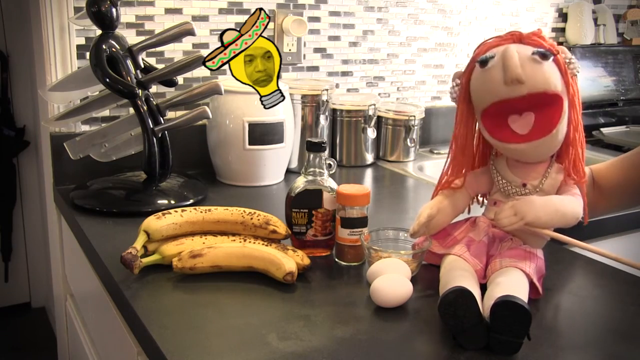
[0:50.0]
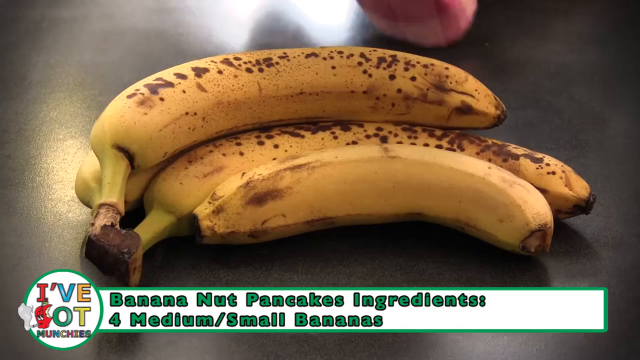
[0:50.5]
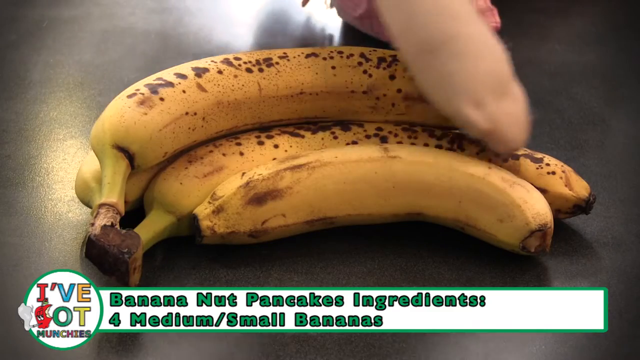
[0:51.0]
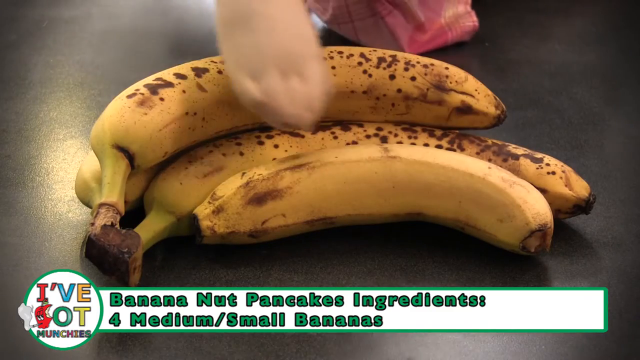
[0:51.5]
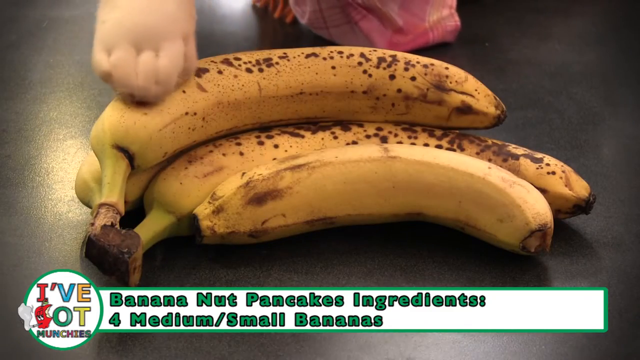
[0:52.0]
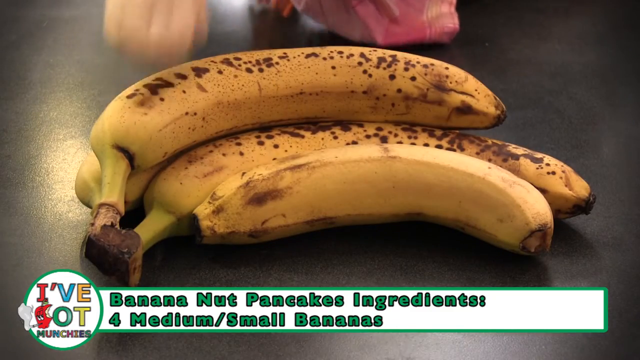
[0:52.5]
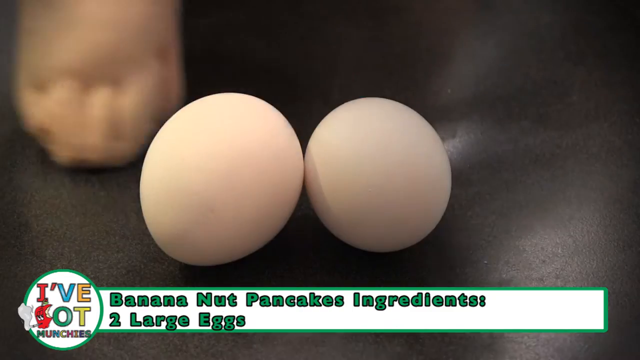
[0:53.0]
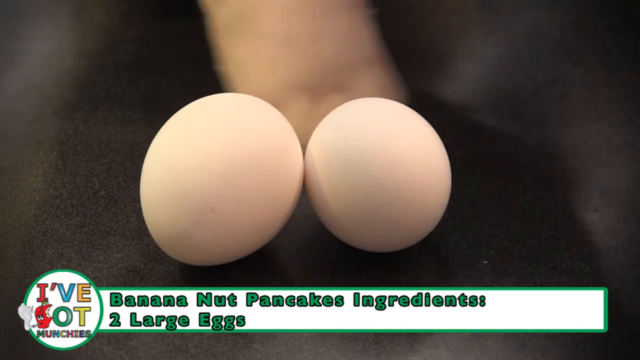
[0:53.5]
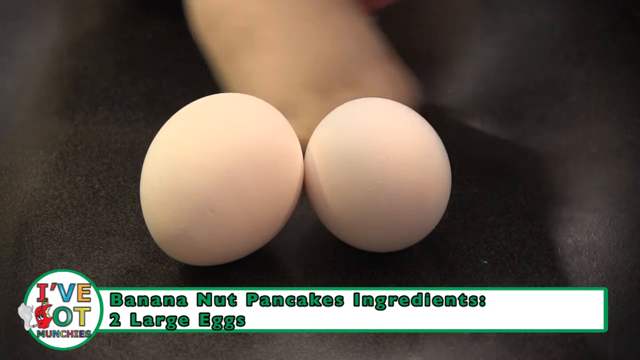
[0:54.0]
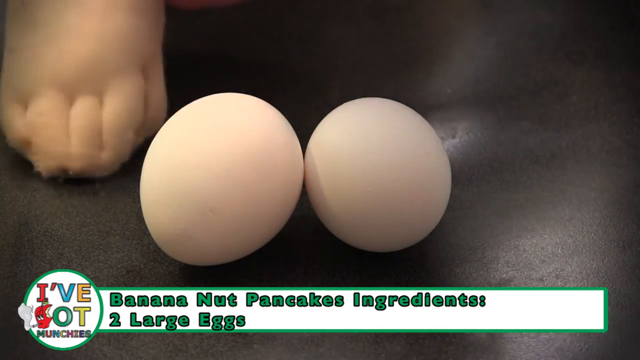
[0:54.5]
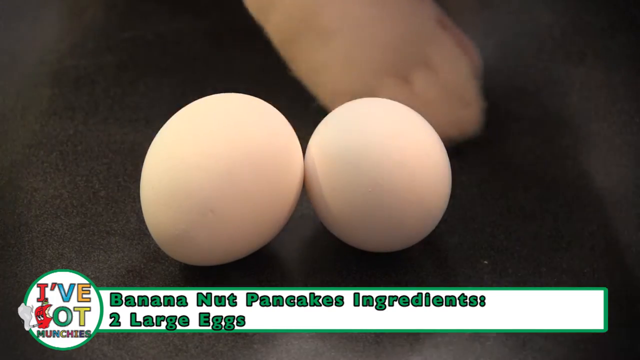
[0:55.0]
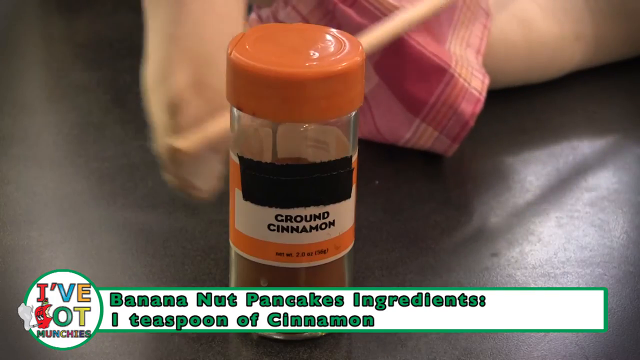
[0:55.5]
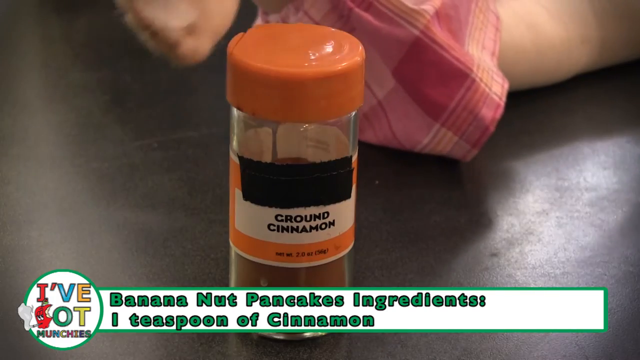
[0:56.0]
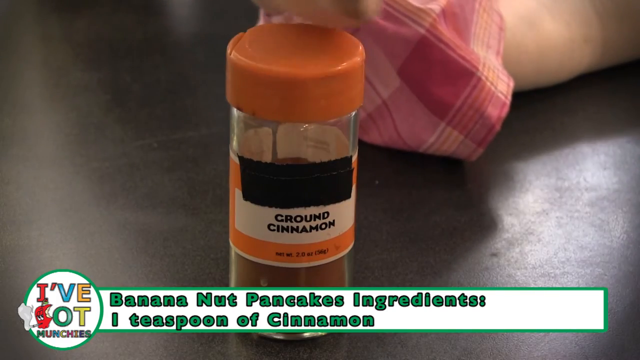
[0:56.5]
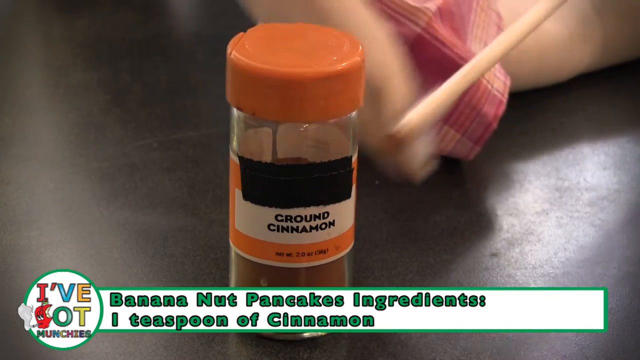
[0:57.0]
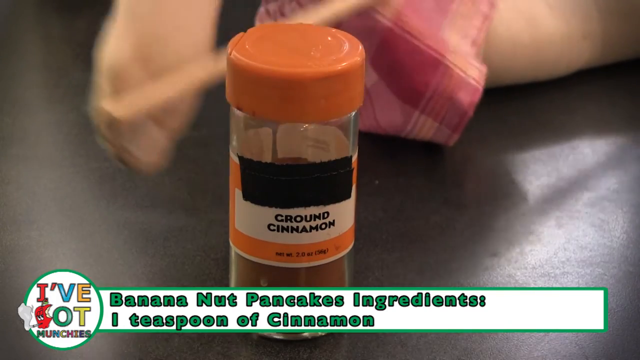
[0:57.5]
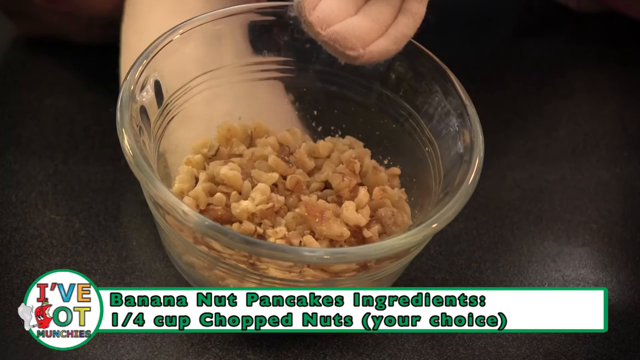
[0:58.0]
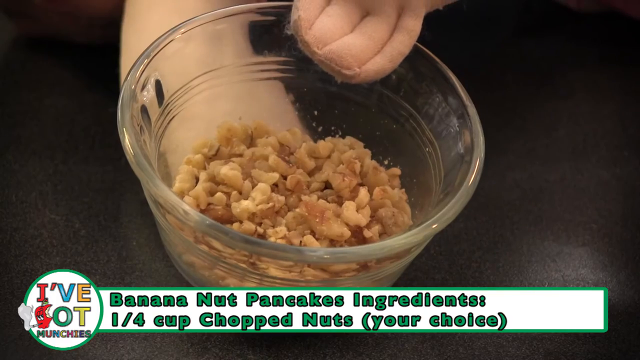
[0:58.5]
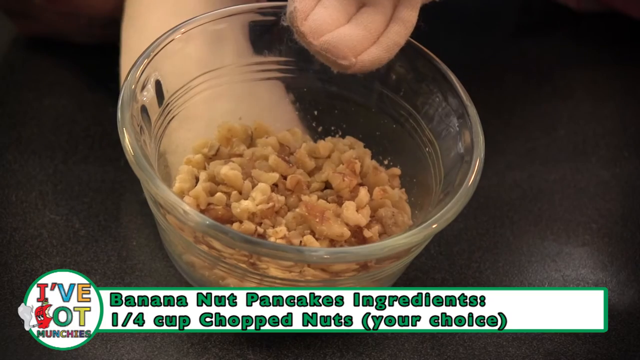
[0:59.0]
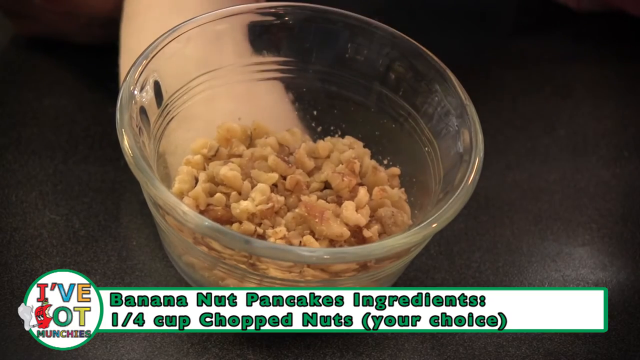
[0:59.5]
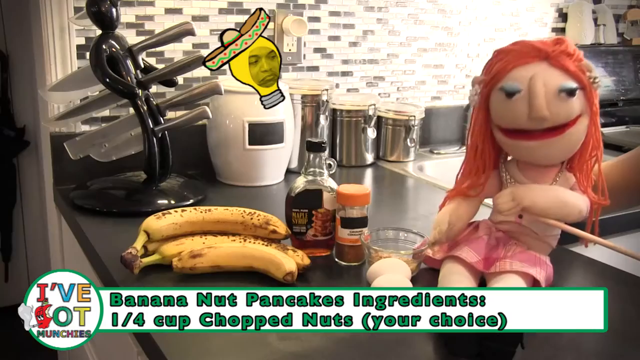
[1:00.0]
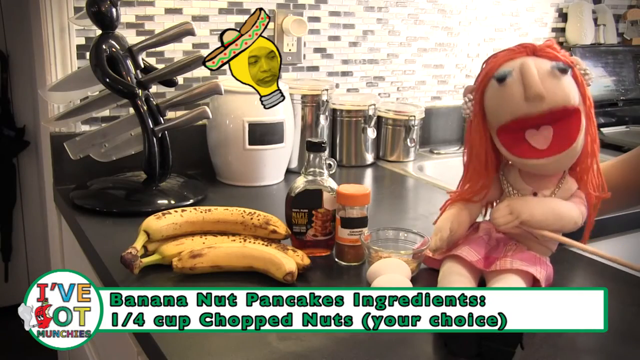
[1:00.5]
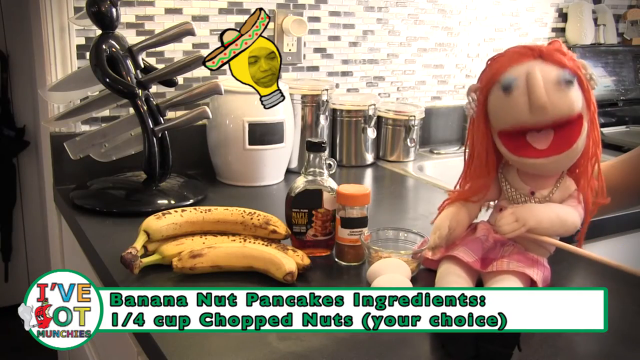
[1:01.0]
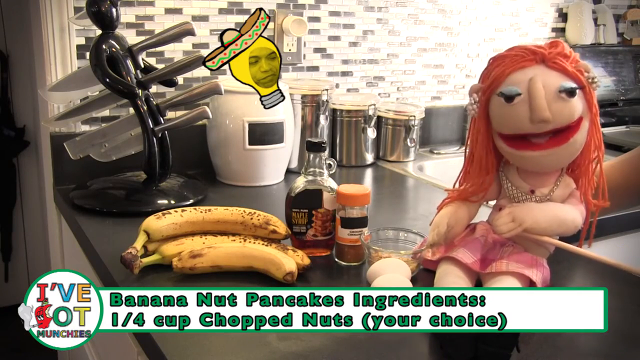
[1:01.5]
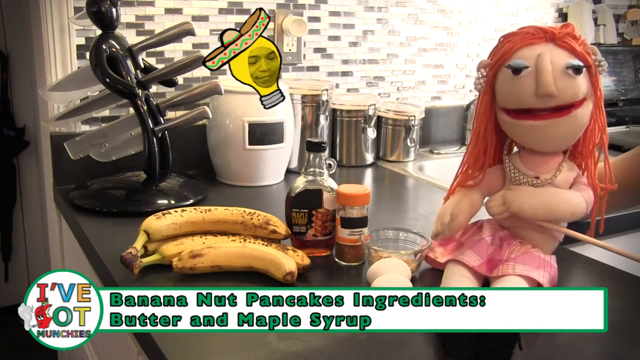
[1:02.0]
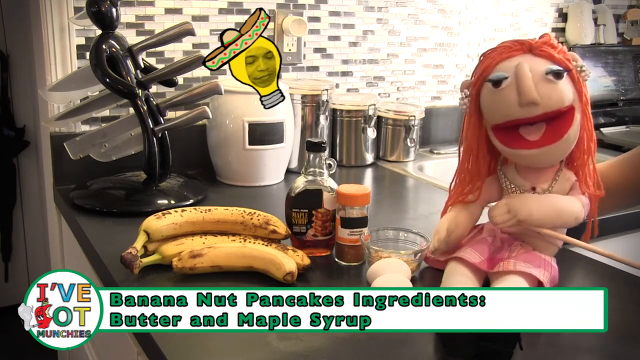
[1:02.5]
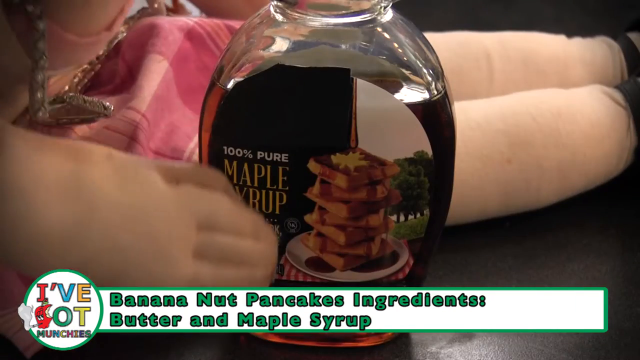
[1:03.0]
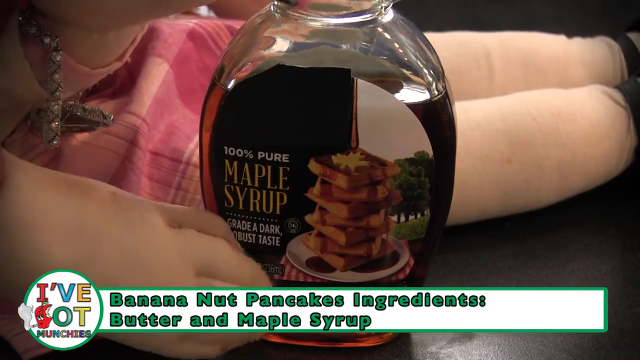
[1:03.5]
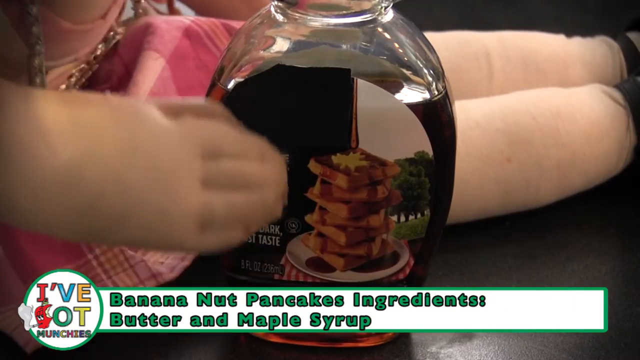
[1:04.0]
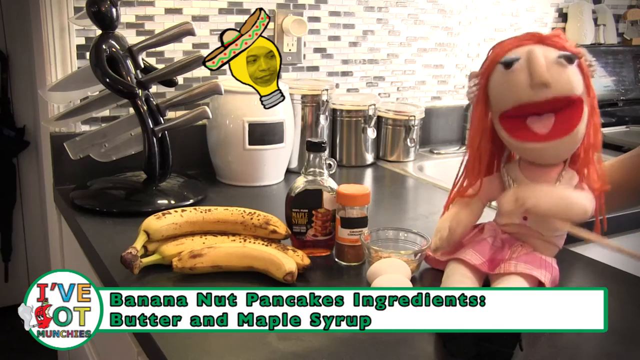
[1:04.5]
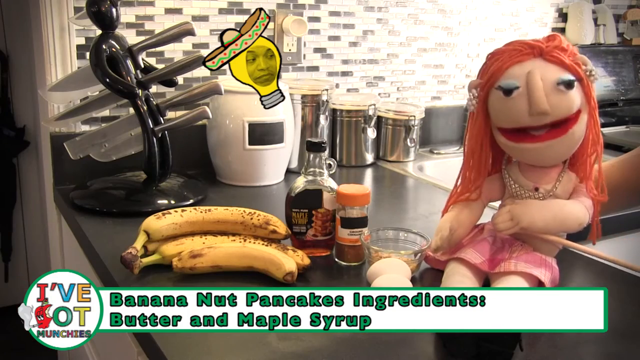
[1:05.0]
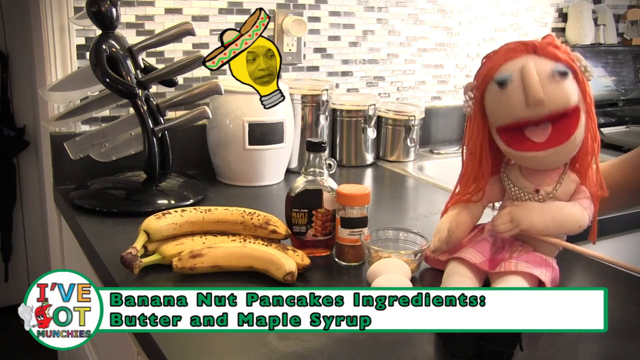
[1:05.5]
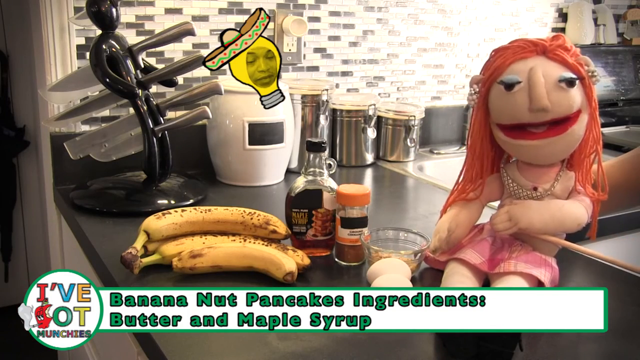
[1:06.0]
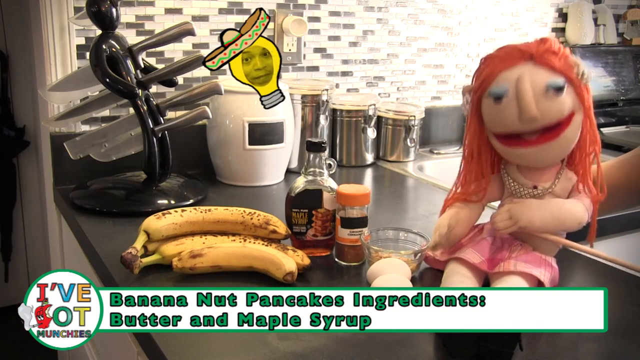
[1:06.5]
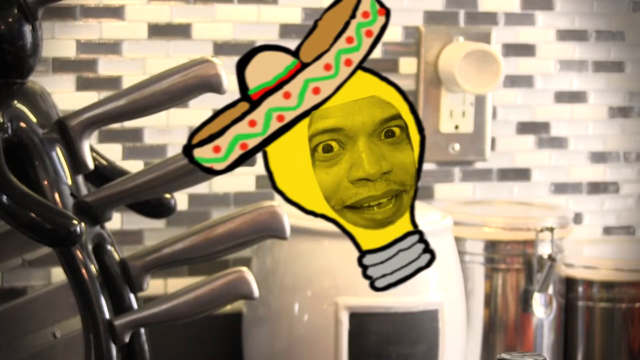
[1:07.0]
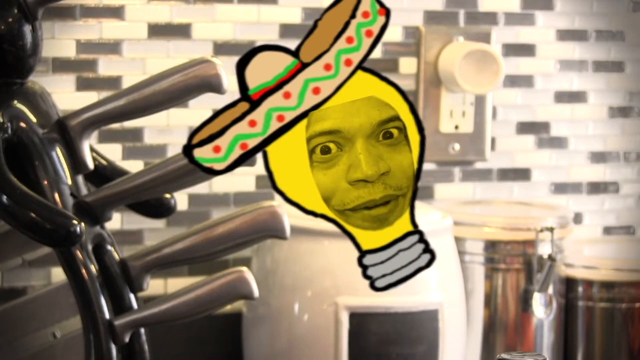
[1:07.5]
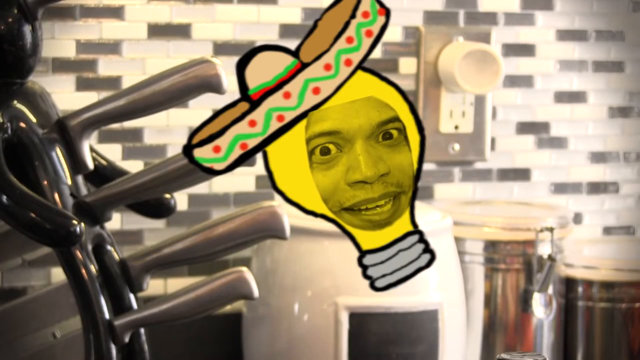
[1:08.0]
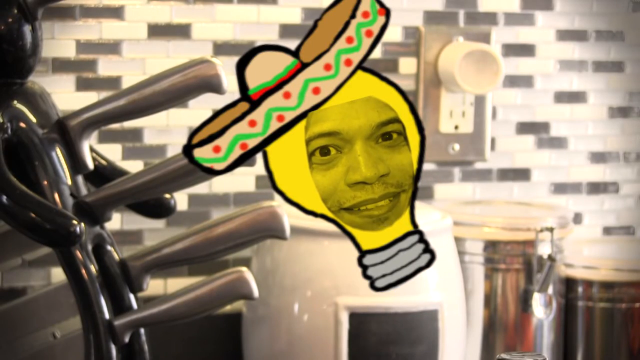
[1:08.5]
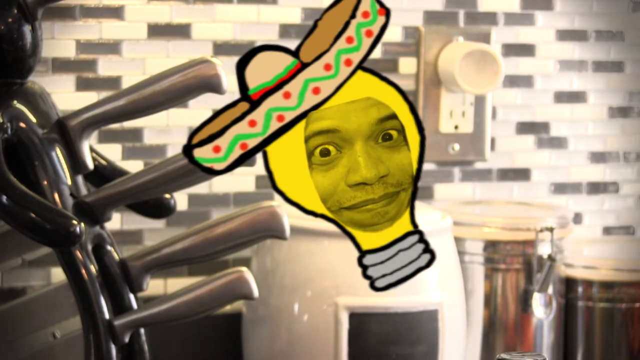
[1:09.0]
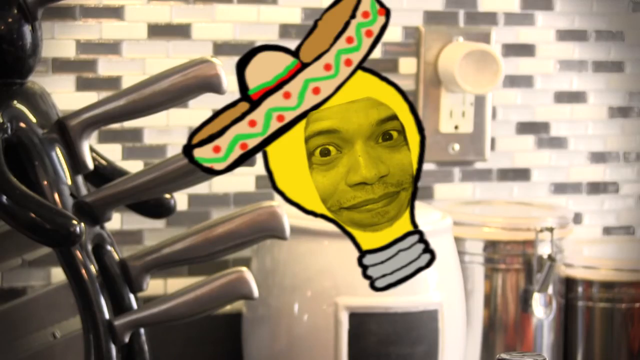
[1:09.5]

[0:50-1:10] The puppet is on the counter, with bananas, maple syrup and a number of different ingredients to its left; the puppet is to the right, talking. It rubs the bananas. Text reads "banana nut pancake ingredients, four medium small bananas, two large eggs", and a new scene shows the two eggs. Another scene reads "one teaspoon of cinnamon" with a bottle of ground cinnamon, and the puppet waves its arms over it. Text reads "one fourth cup of chopped nuts, your choice", shown with little chopped walnuts. The puppet appears to be talking about the ingredients and what is required. Text reads "maple syrup, butter", shown with a bottle of maple syrup and butter, which the puppet is rubbing. The scene goes back to the light bulb with a man's face in it, which looks like it is talking to the puppet, and then to the puppet on the counter talking about the ingredients for the banana pancakes.